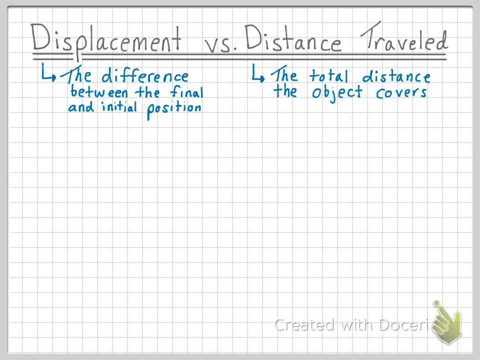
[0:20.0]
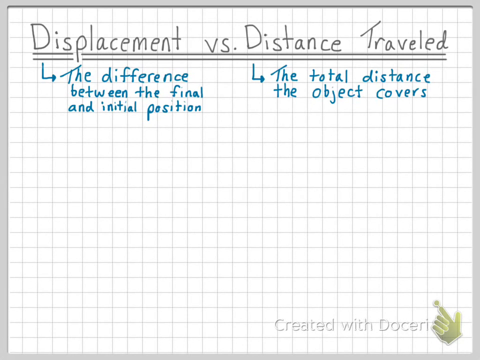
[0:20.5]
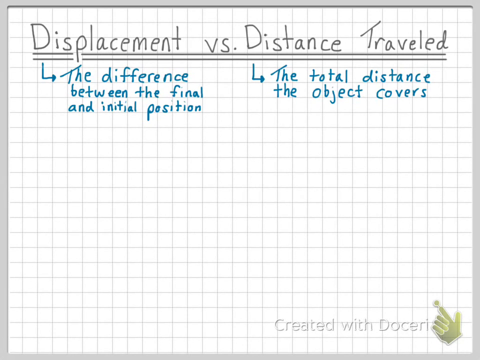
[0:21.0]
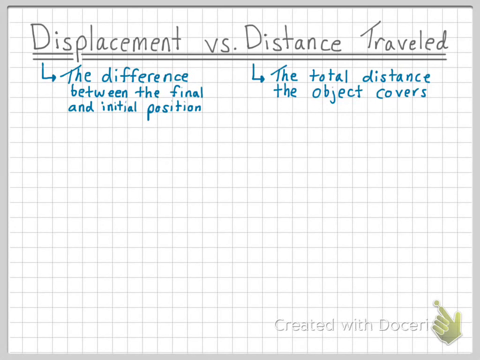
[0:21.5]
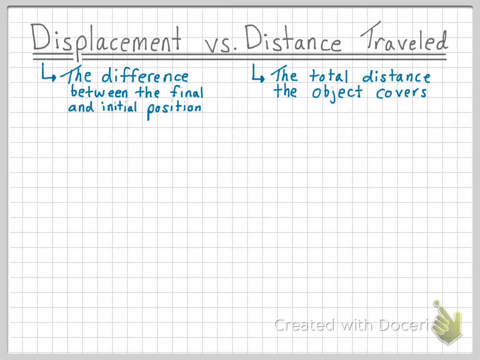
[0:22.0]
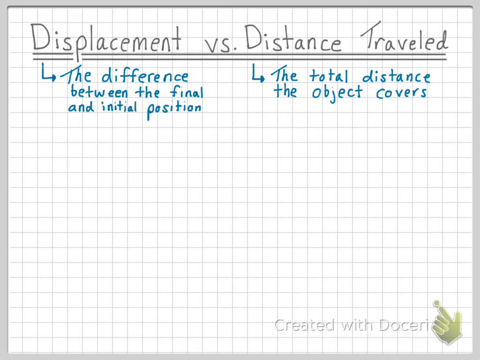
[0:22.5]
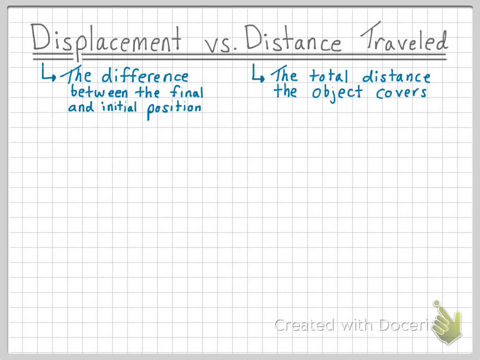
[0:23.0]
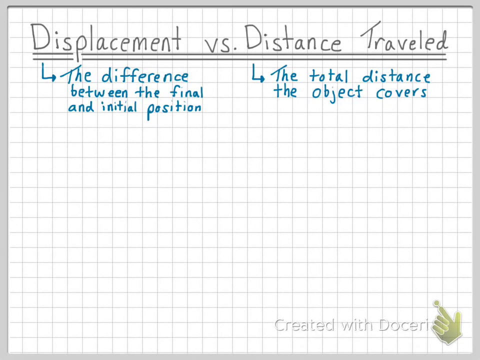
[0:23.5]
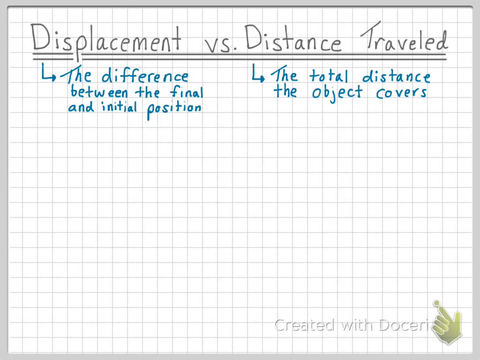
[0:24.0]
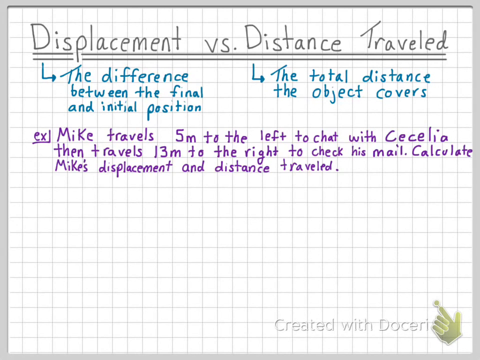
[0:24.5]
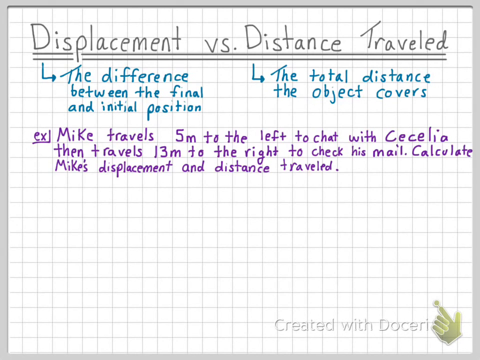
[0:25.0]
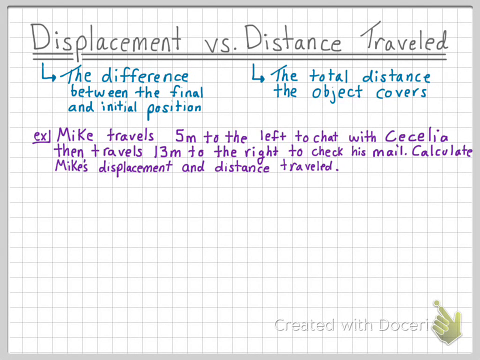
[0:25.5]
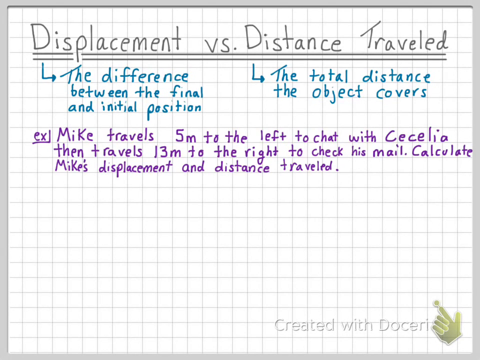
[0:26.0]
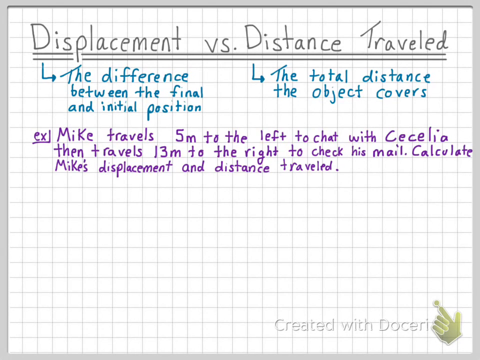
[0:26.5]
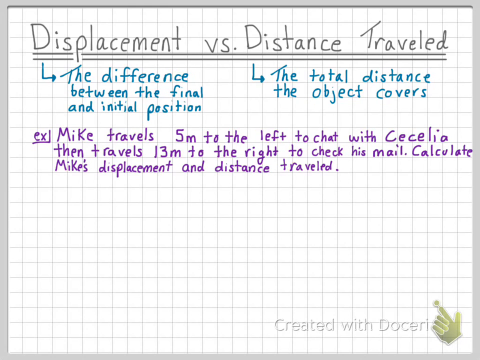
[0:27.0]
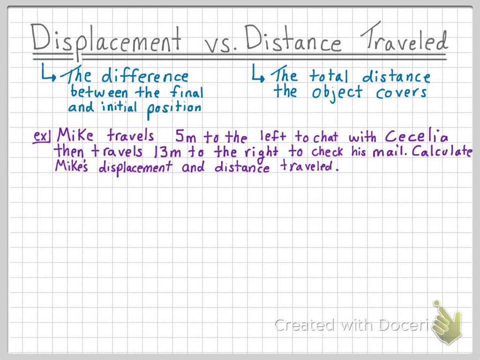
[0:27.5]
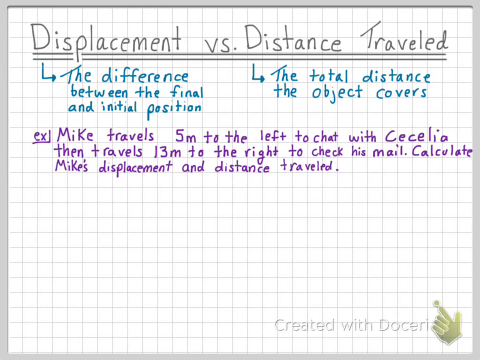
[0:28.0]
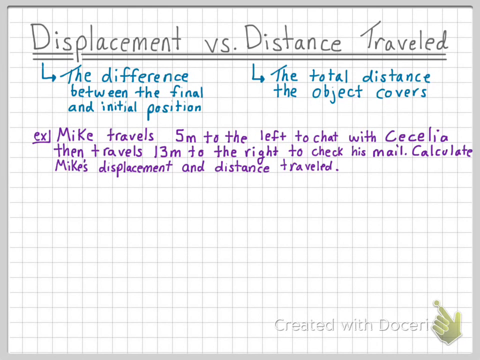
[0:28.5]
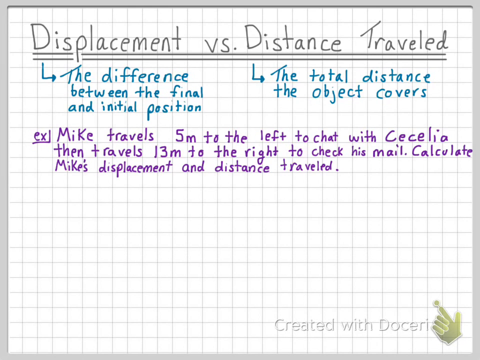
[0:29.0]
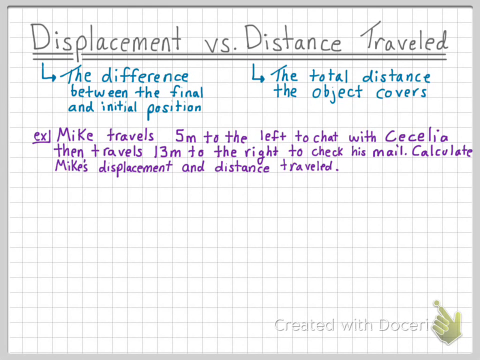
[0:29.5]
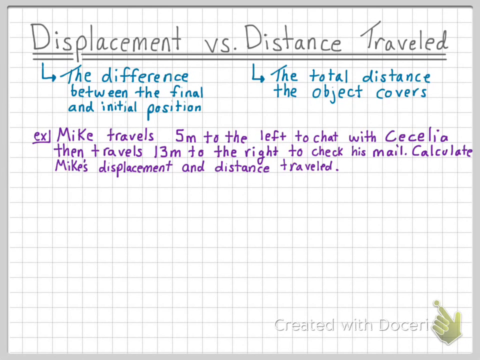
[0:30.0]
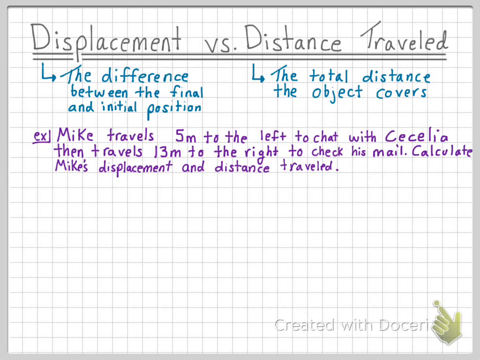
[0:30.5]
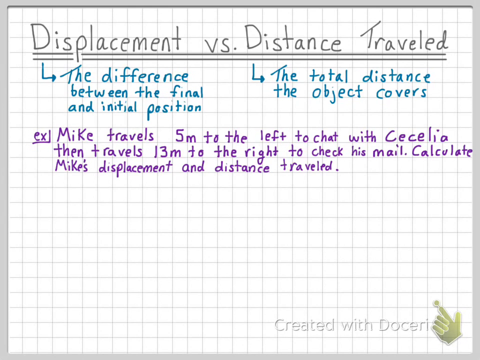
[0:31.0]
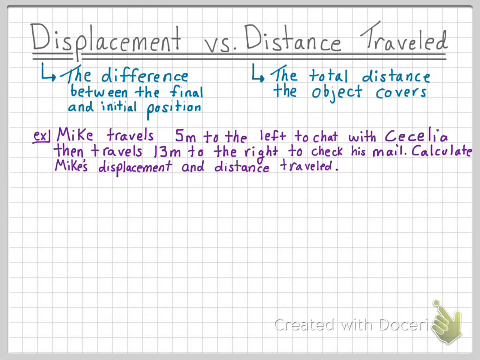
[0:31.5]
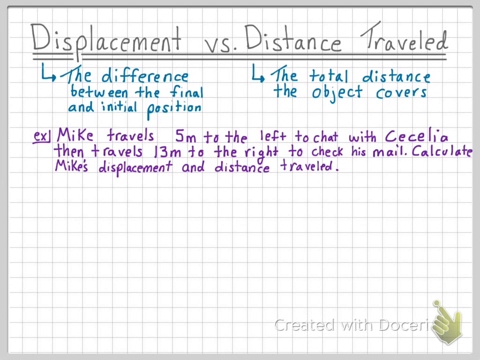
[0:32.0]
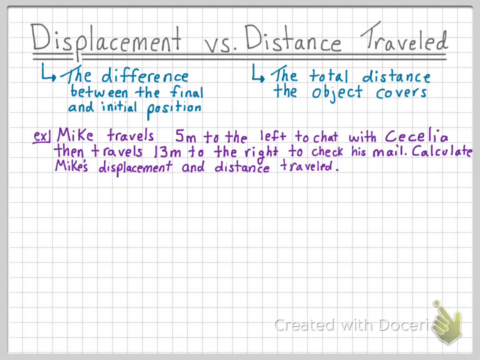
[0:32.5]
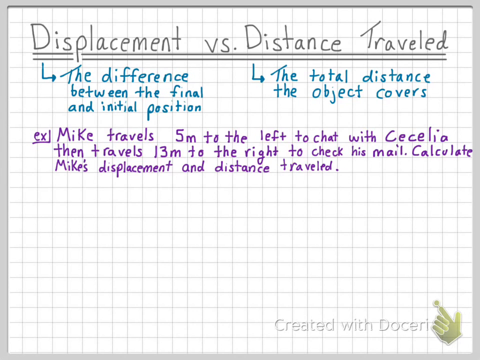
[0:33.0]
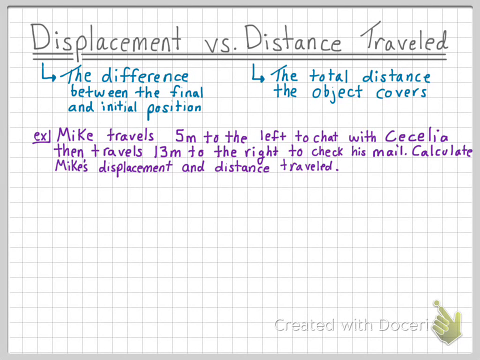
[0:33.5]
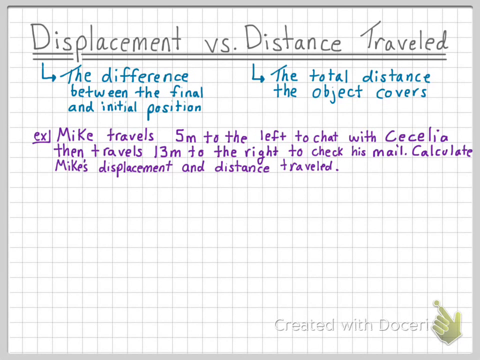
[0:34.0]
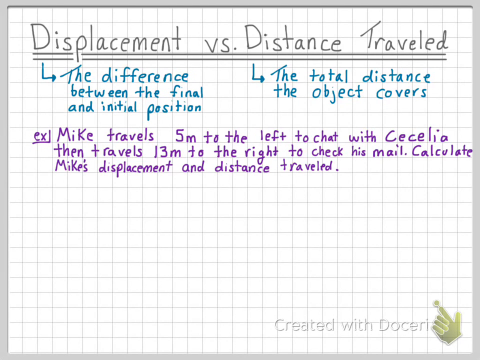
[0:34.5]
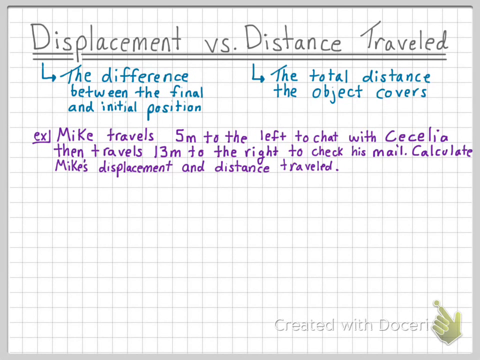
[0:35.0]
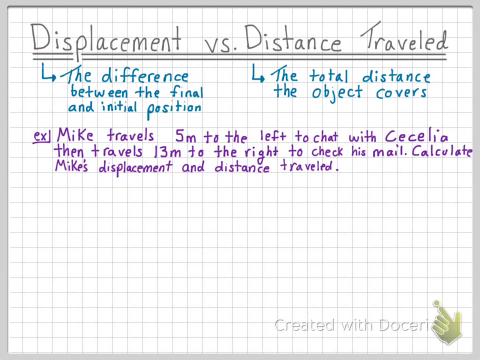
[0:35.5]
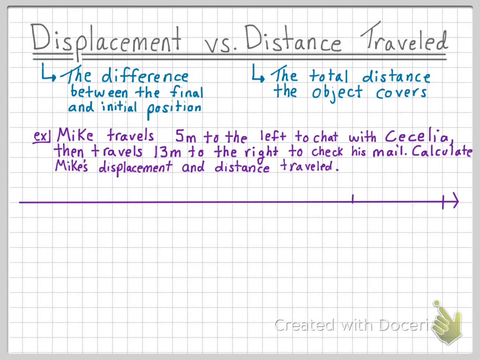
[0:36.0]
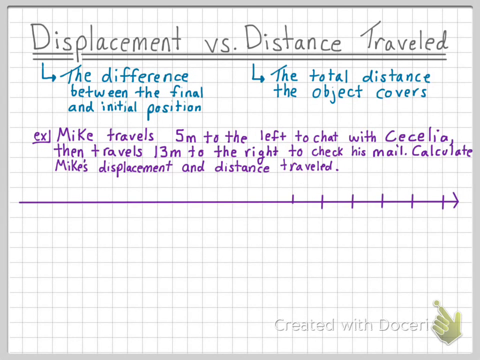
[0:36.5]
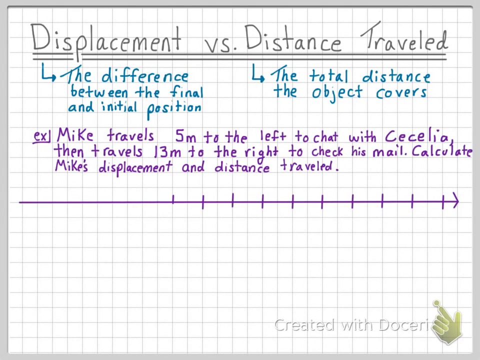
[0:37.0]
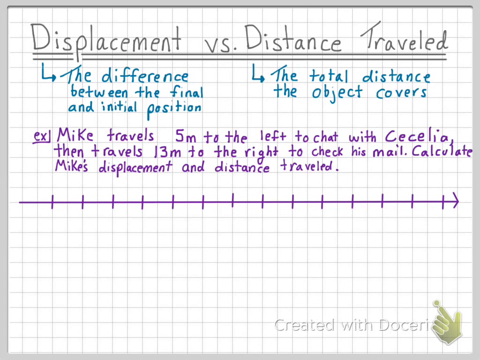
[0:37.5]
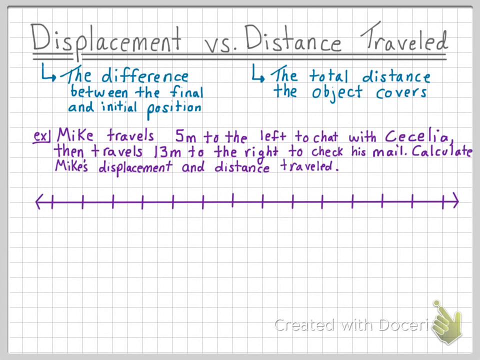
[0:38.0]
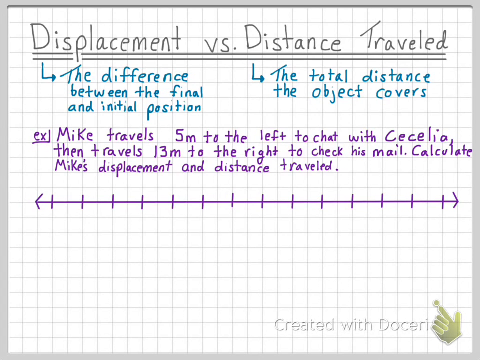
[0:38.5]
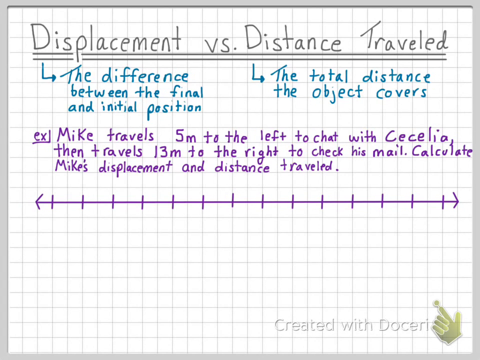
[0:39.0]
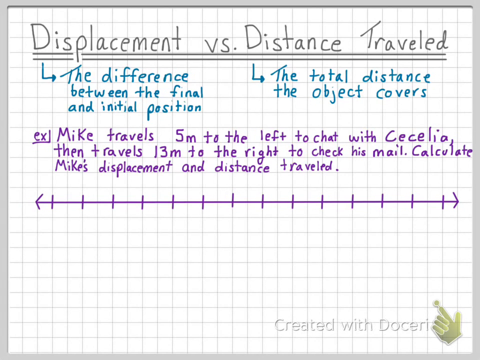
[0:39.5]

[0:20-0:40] The white grid board, apparently a whiteboard, shows the heading "displacement versus distance traveled" with the same definitions: the difference between the final and initial position, and the total distance the object covers. More information is written, and an example appears: "Mike travels five meters to the left to chat", apparently setting up an equation. A line graph with several notches then appears. The watermark is still in the bottom corner and reads "written by doceri". The writing is in grey and blue.